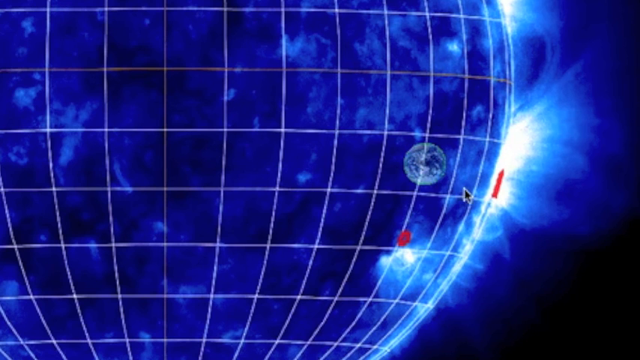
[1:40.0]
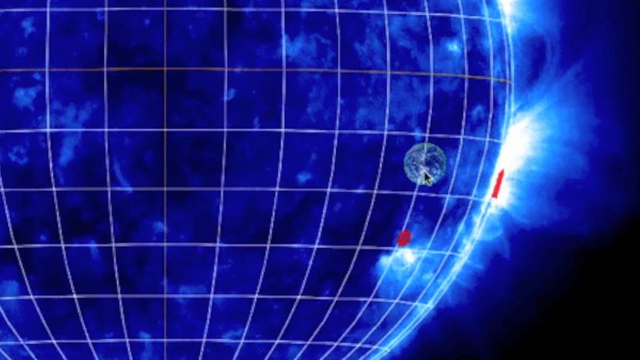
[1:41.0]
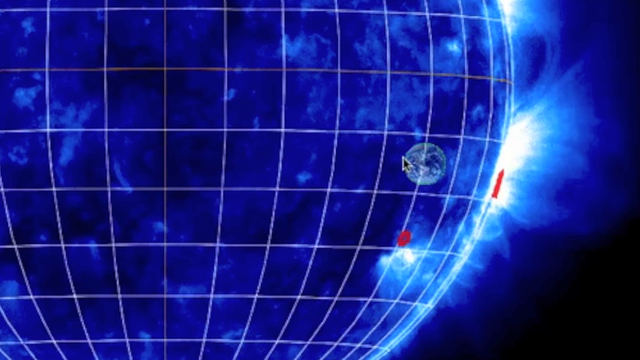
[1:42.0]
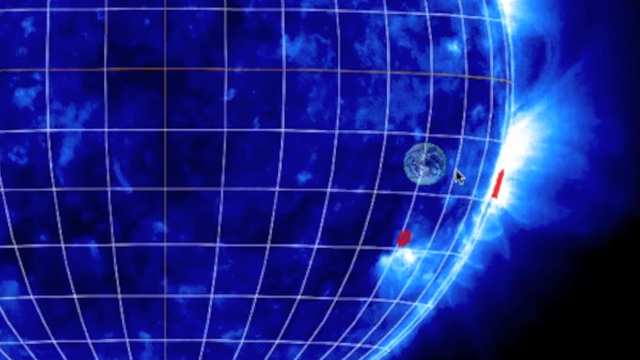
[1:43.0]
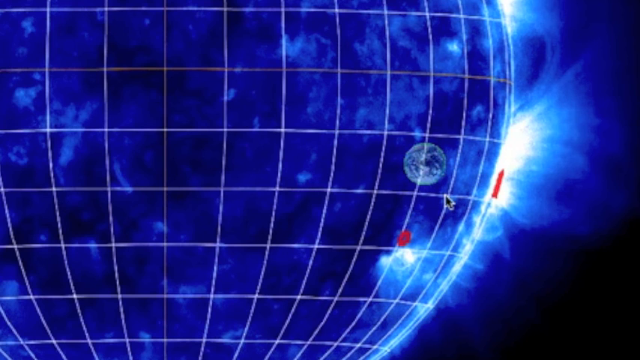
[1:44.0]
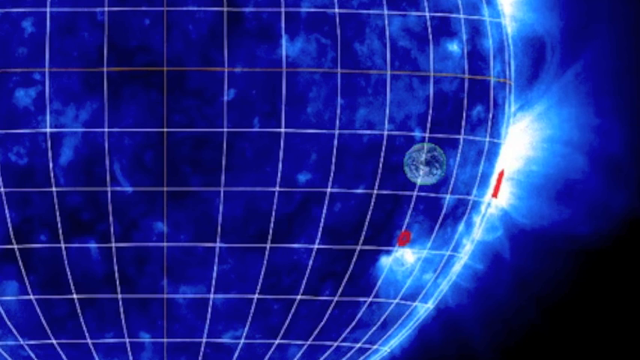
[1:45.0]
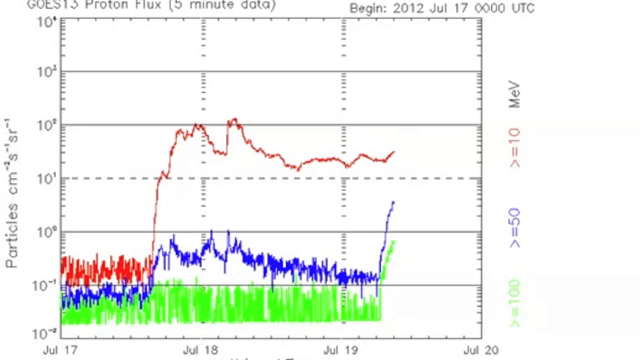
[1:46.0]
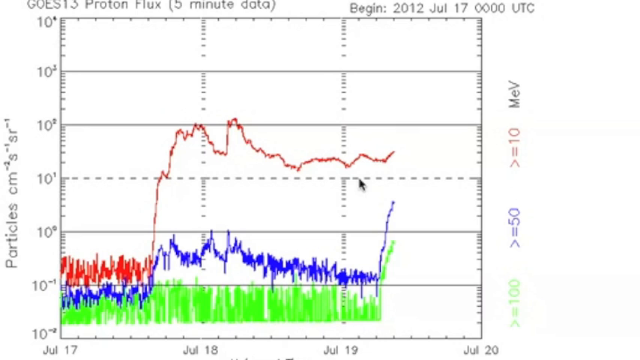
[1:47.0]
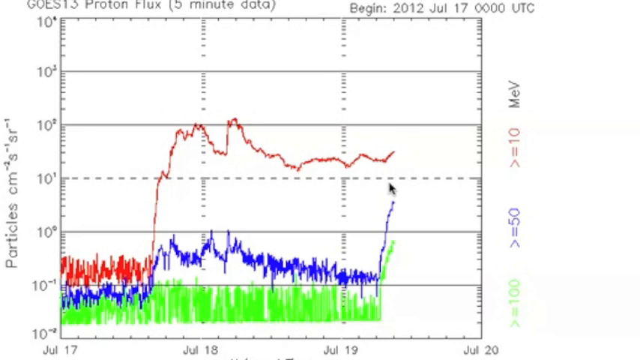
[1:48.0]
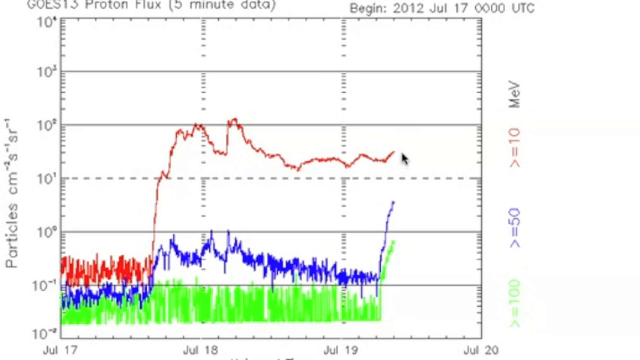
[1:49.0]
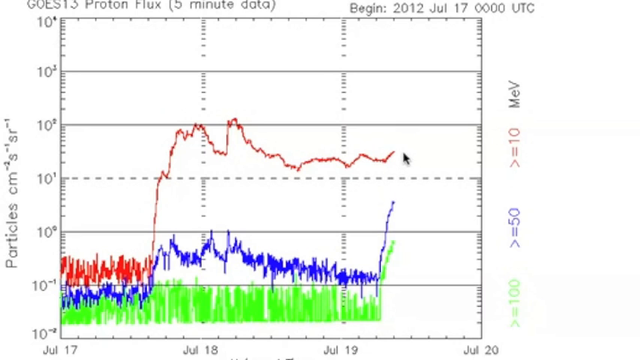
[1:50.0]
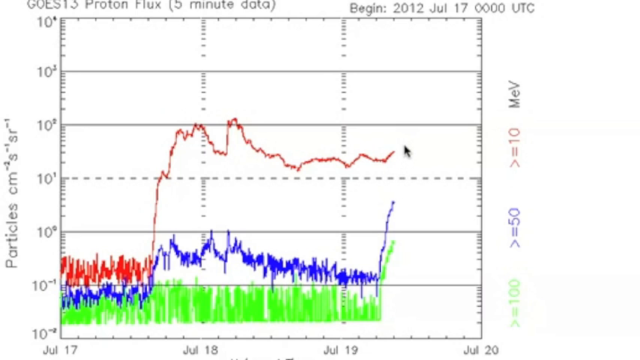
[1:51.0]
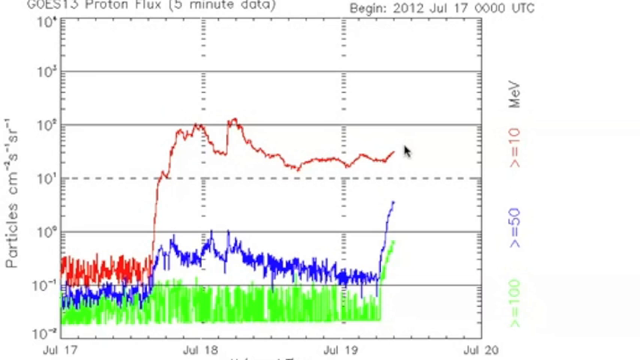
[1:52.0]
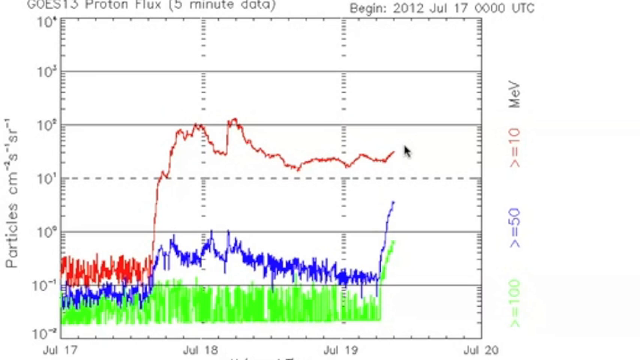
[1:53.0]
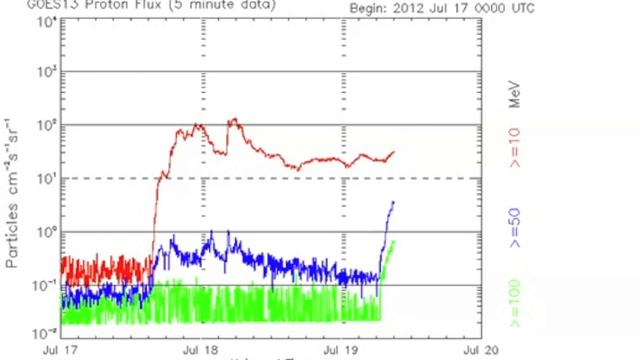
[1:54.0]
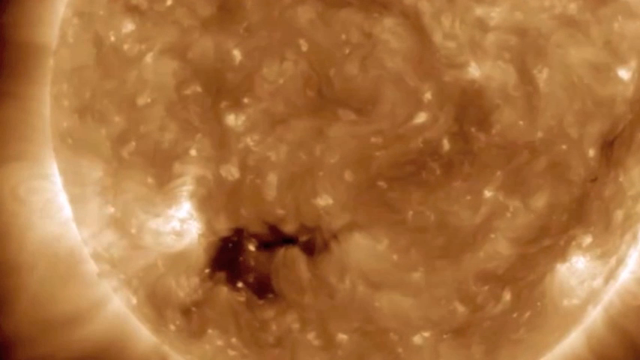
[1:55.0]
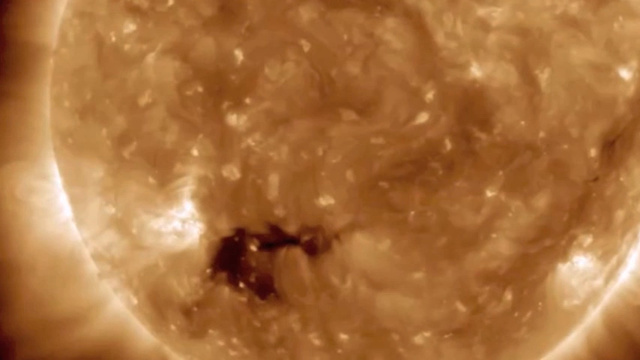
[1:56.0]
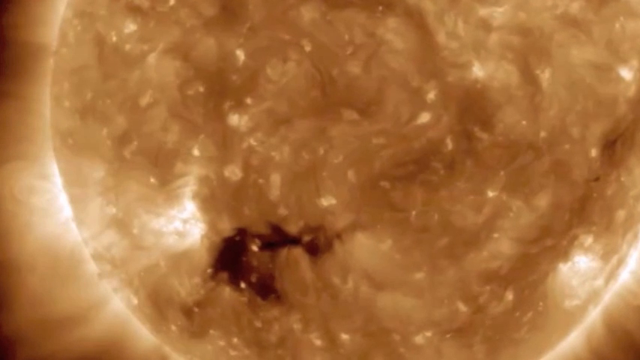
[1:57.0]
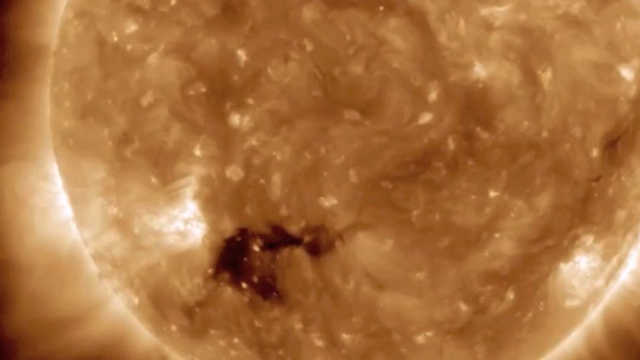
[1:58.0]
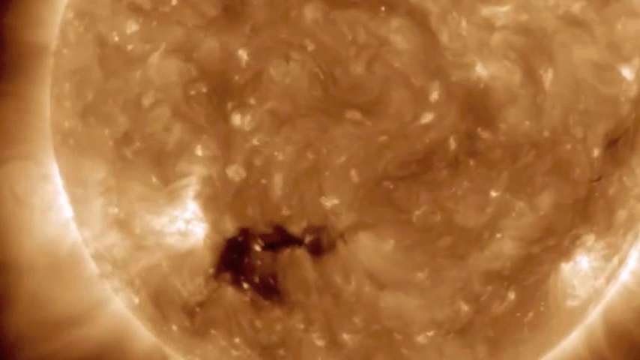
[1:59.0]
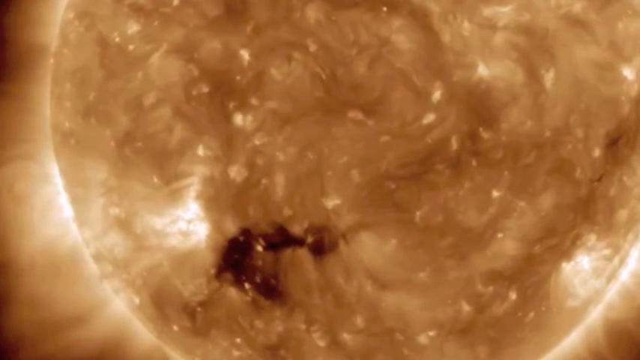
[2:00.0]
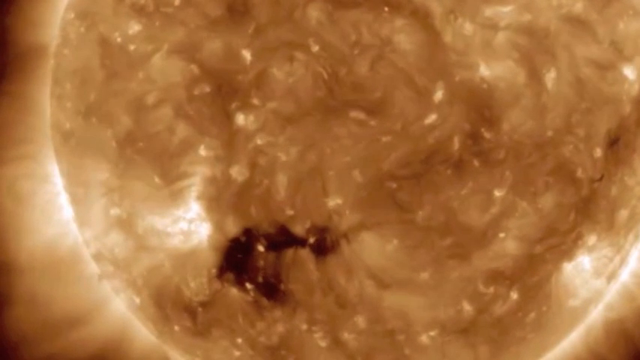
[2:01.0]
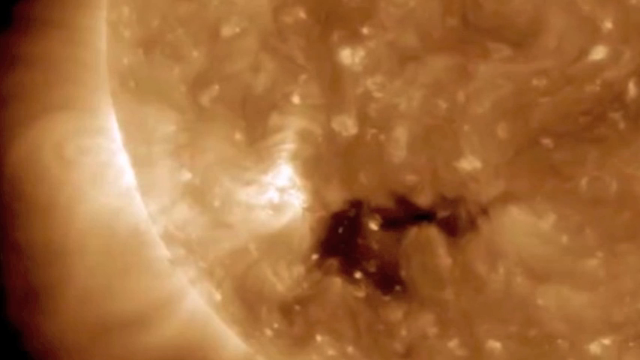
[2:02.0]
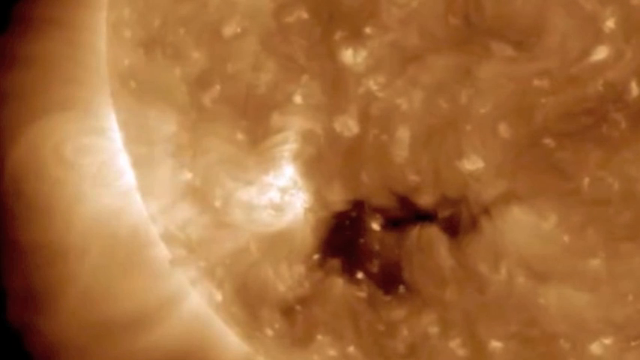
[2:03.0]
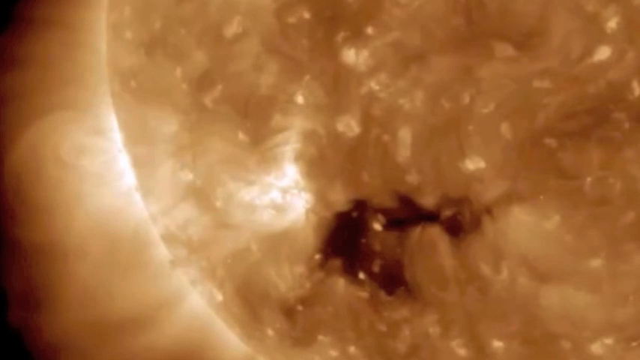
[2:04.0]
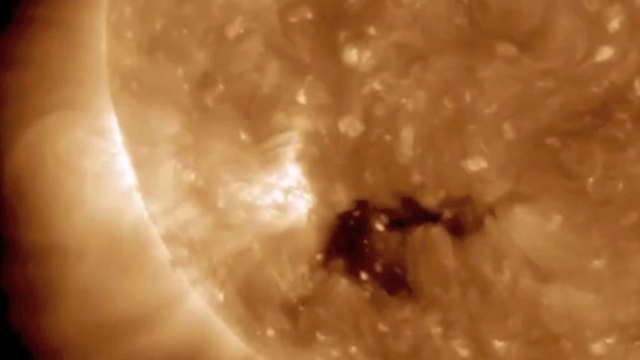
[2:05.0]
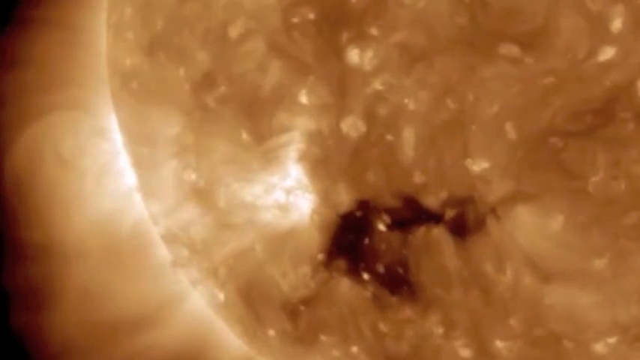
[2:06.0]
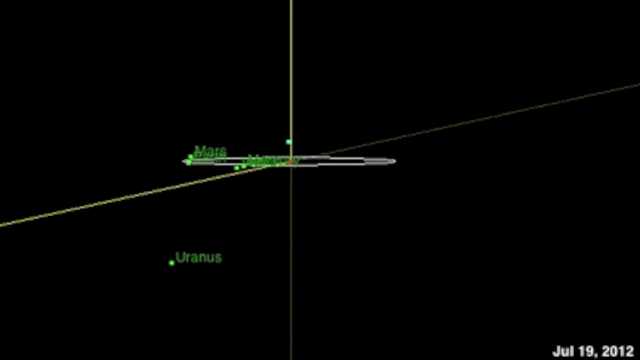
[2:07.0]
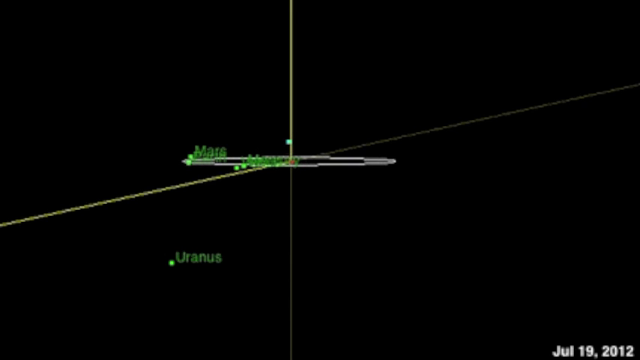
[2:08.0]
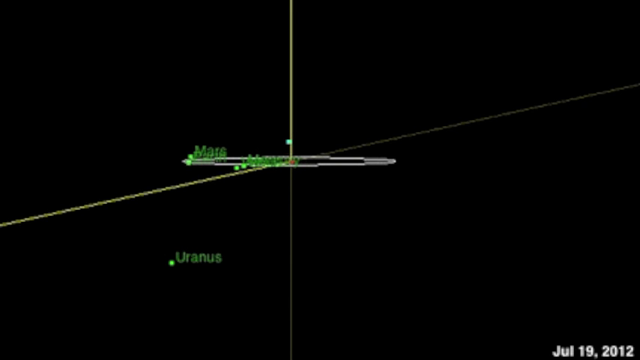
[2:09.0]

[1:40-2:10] On a spherical grid, planet Earth is almost all the way to the right, roughly in the middle vertically. The cursor arrow circles around Earth, as if somebody is explaining something. The screen then moves to a line graph: a red squiggly line is fairly static for a while, then shoots up significantly and stays up, around the middle; the labels on the left read "10." A blue line runs right underneath the red line, and when the red line shoots up, the blue line only goes up slightly and stays there, leaving a big gap between them. Along the bottom, a green squiggly line runs all the way across. At the end the cursor arrow hovers around the red line. The video then returns to the close-up of a swirly, marbly bronze and white mixture with a dark brown bunch in the middle, cutting between a few different views of it. Finally a black screen appears with a white circle, some green squiggles, and text reading "Mars," something unreadable, and "Uranus."